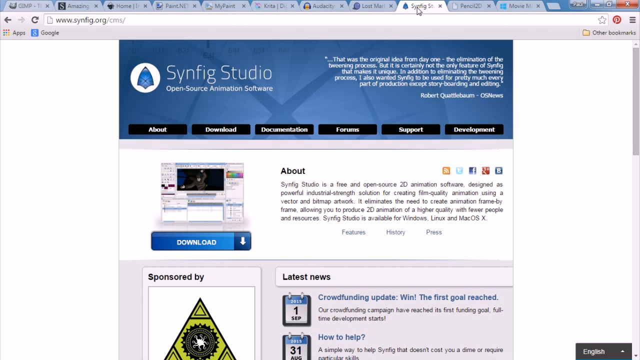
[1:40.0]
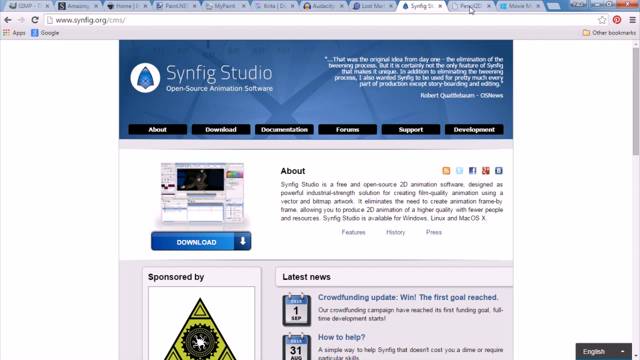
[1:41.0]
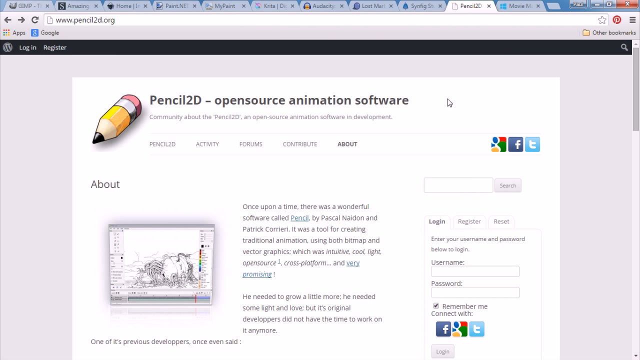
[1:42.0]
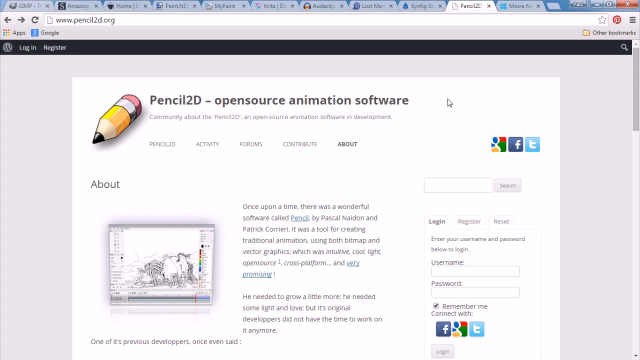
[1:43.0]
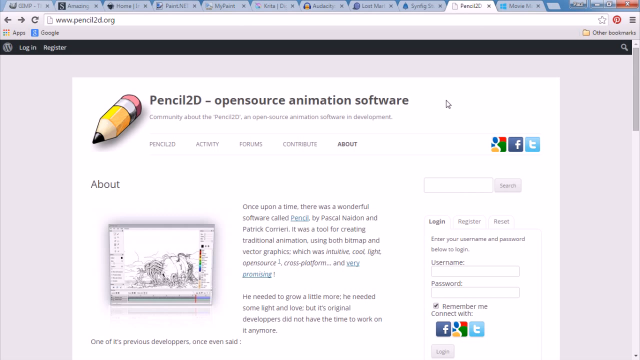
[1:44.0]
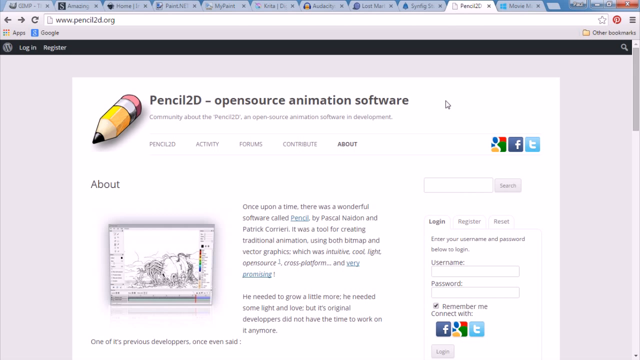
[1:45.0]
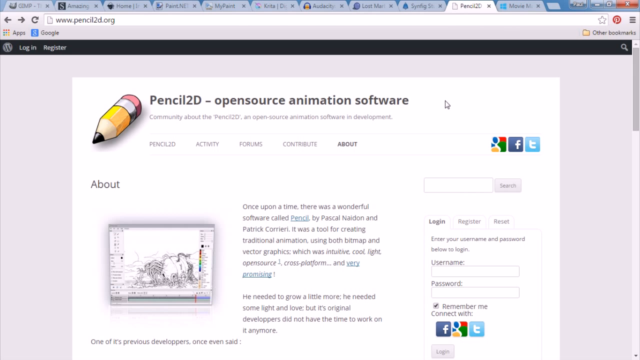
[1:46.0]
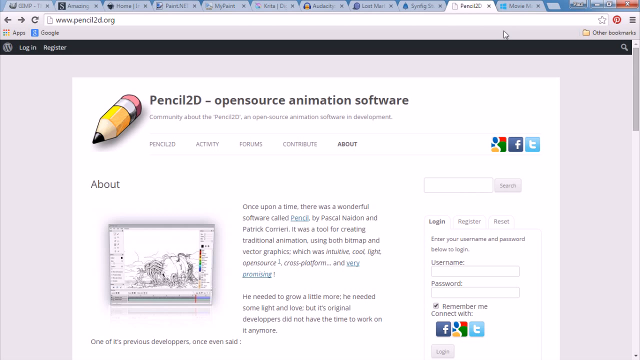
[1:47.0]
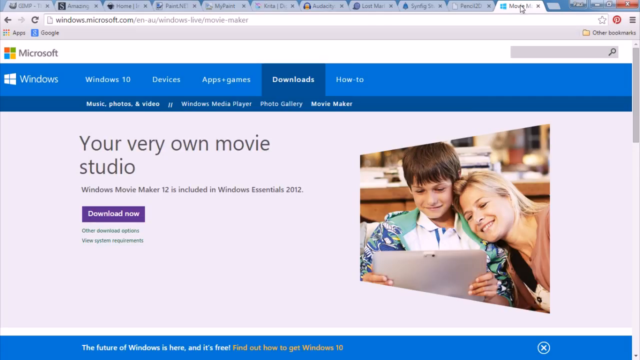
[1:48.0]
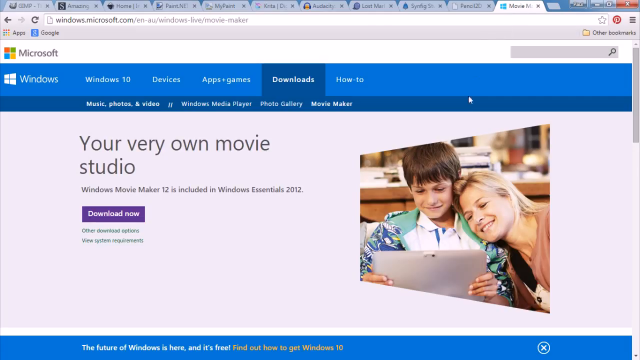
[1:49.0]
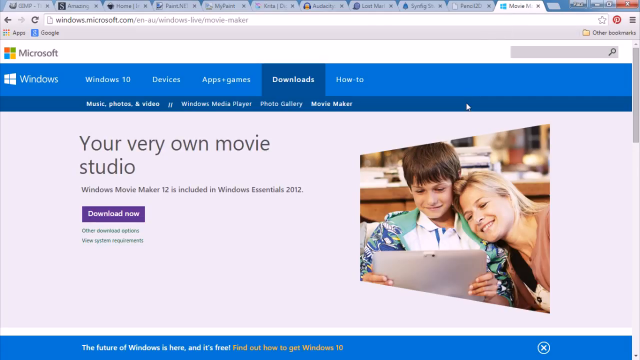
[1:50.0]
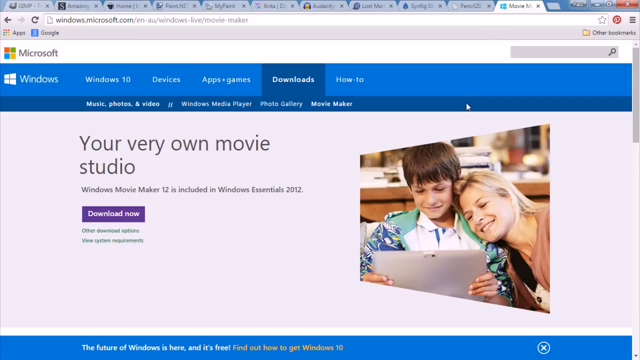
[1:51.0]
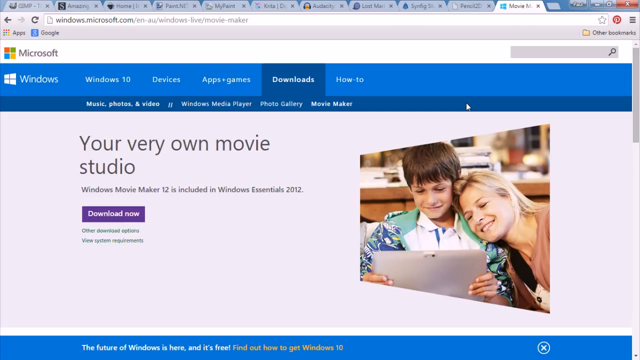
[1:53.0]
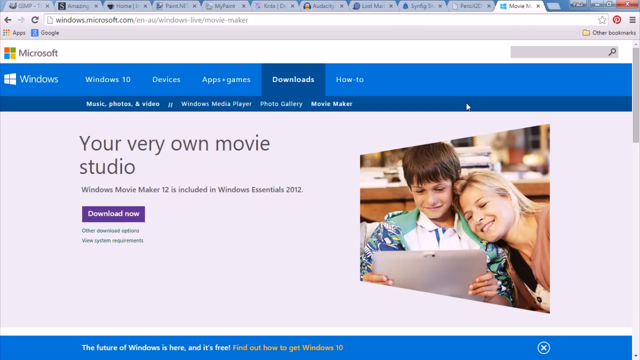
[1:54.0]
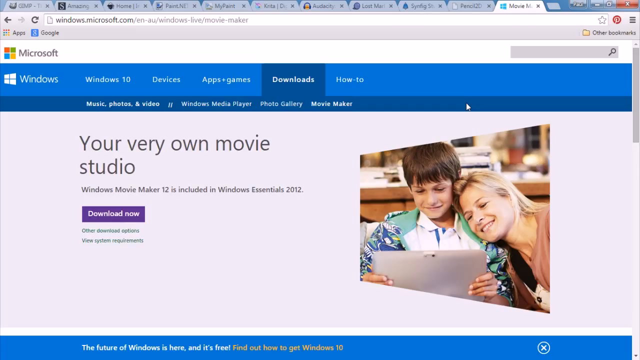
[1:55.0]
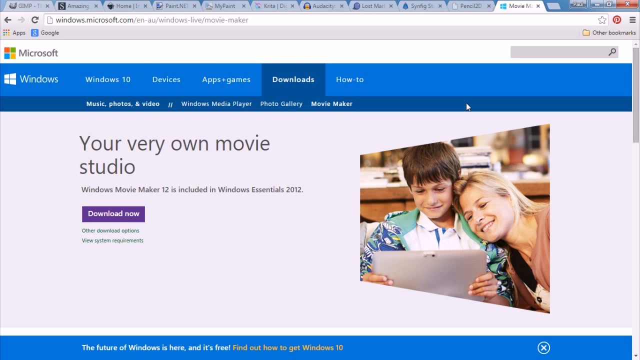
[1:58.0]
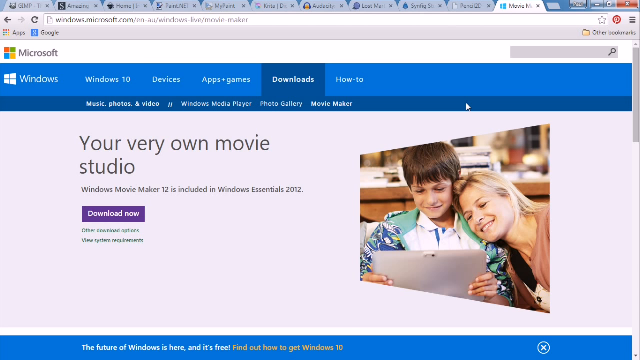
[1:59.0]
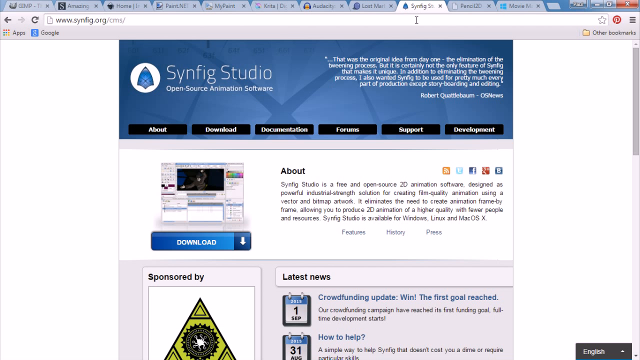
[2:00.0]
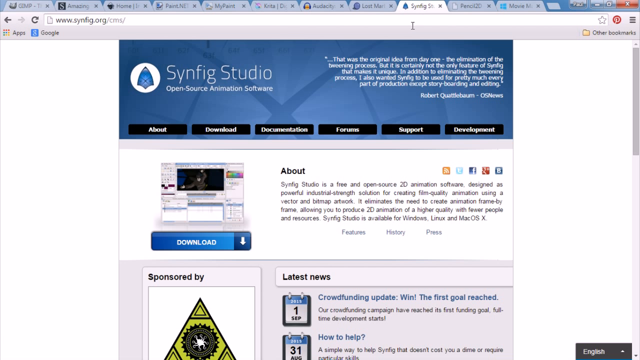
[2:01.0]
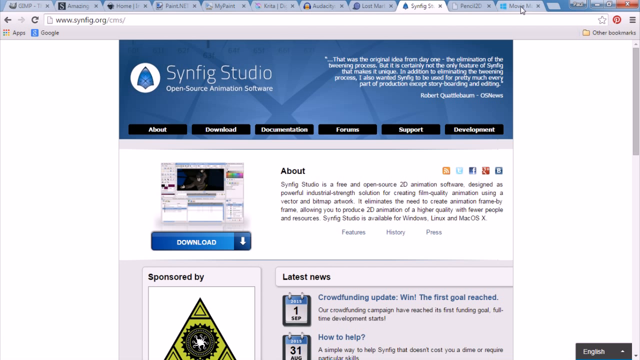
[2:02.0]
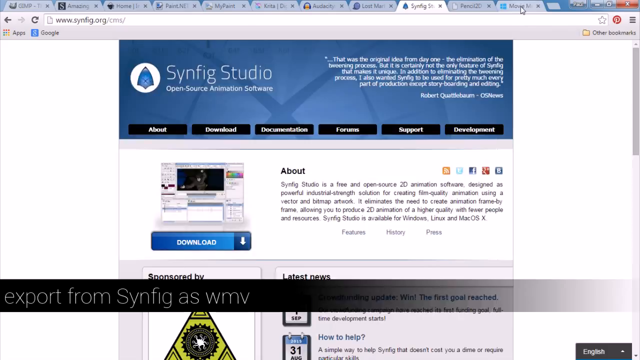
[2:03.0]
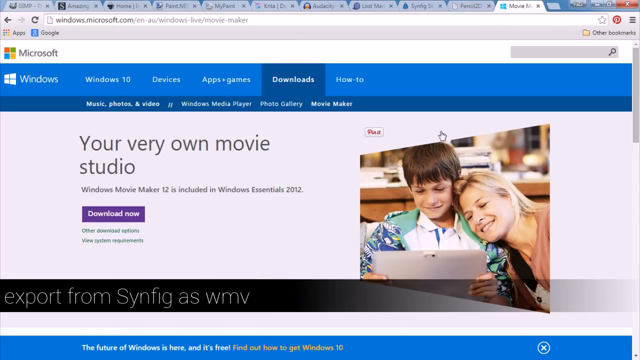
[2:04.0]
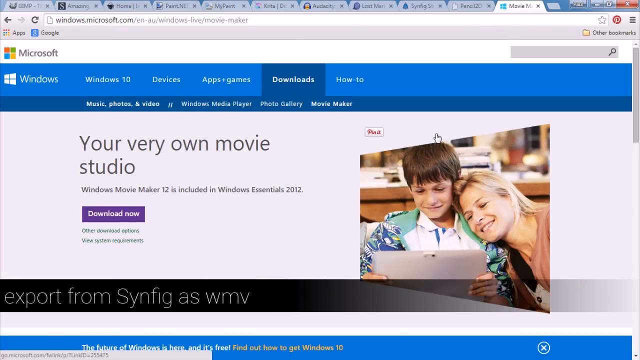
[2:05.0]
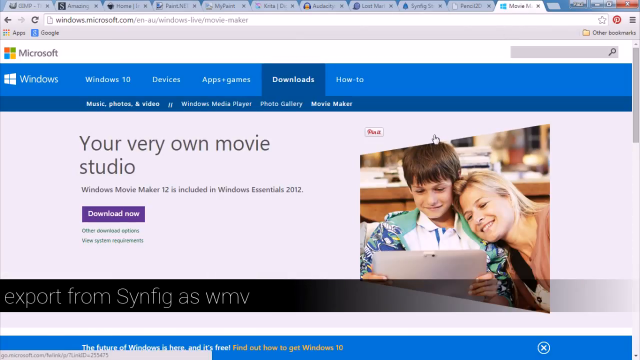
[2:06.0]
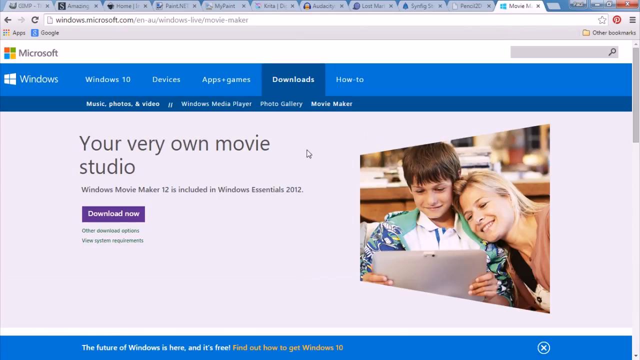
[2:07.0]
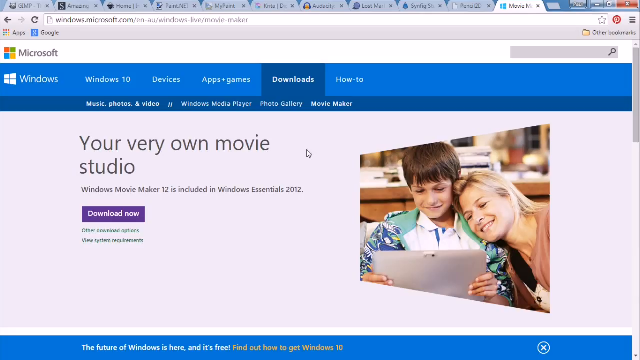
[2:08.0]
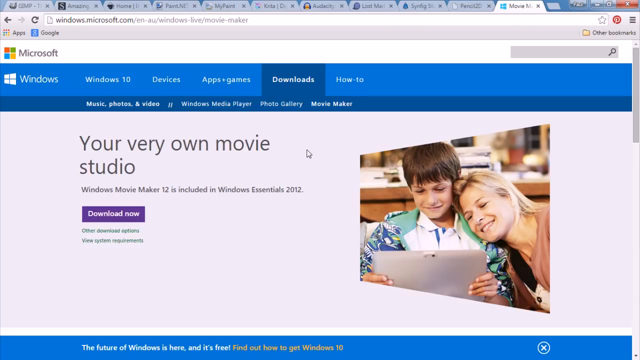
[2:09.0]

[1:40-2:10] After flicking through many tabs, the person reaches a tab with only two tabs left after it. In the upper left corner, white text on a bluish background that is not solid blue reads "Synfig Studio," apparently open source animation software. Text in the right corner is very hard to read; part of it reads "that was the original idea from day one." The next tab is "Pencil 2D open source animation software," which is on Google Plus, Facebook and Twitter. The last tab is windows.microsoft.com, with the Microsoft label in the upper left corner. It reads "your very own movie studio," "Windows Movie Maker 12 is included in Windows Essentials 2012" and "download now."